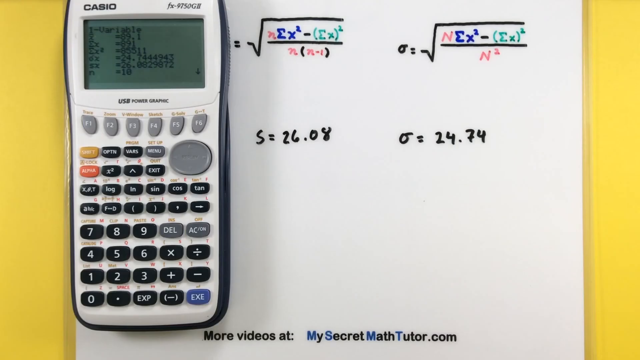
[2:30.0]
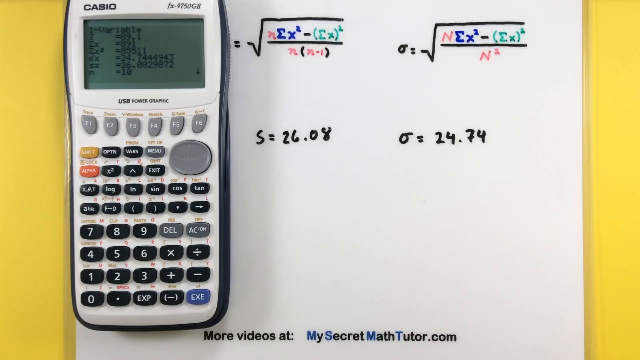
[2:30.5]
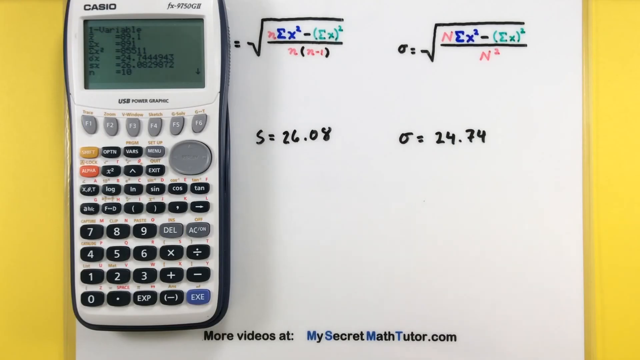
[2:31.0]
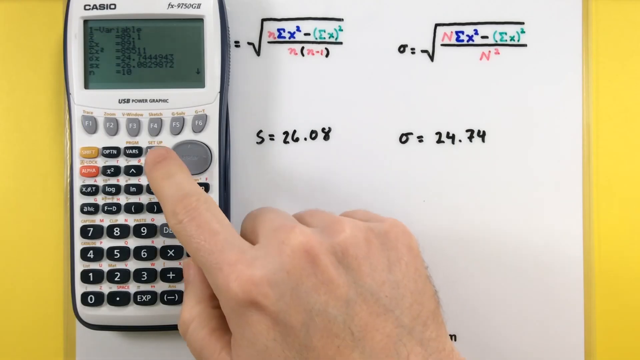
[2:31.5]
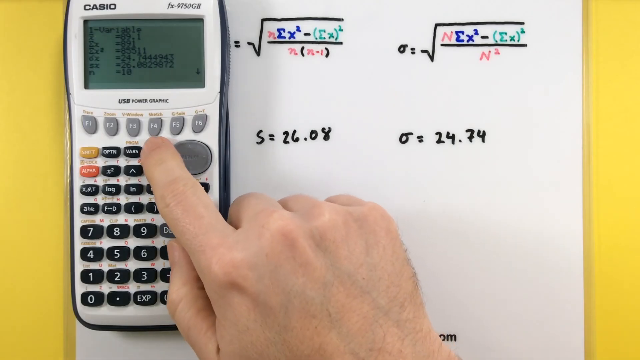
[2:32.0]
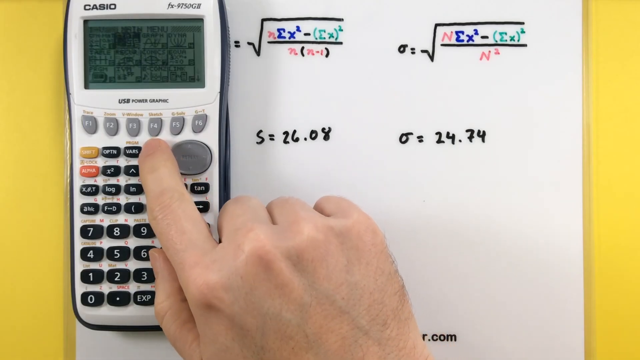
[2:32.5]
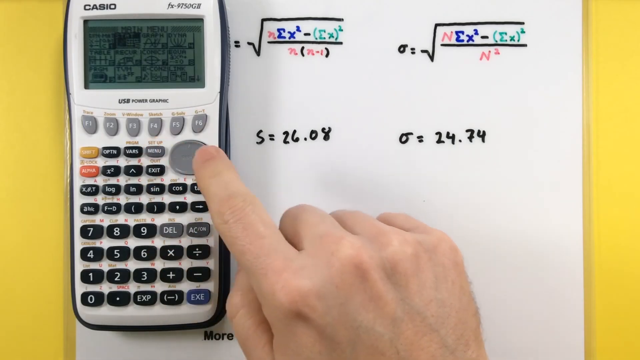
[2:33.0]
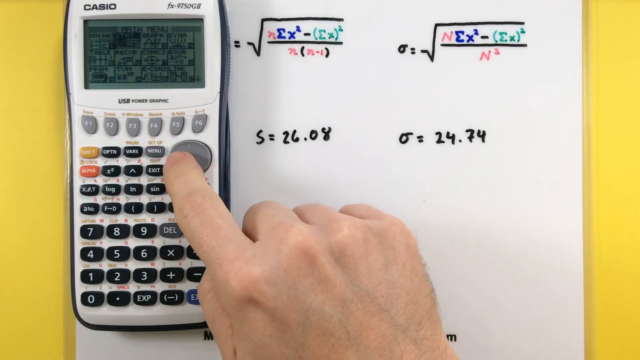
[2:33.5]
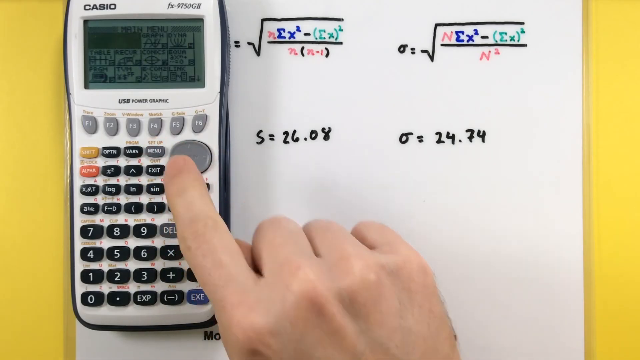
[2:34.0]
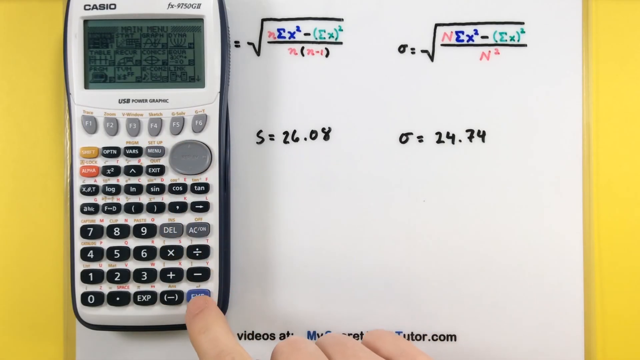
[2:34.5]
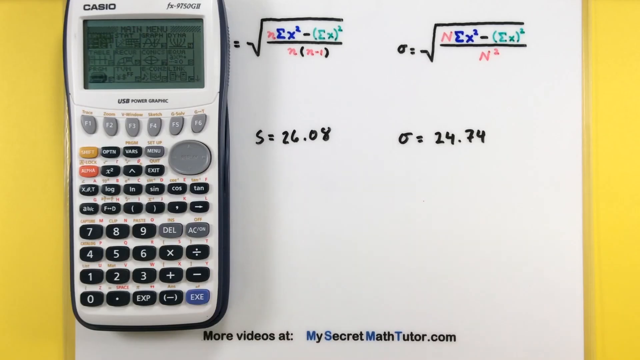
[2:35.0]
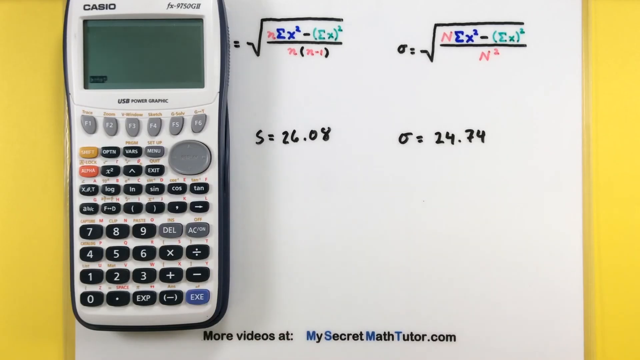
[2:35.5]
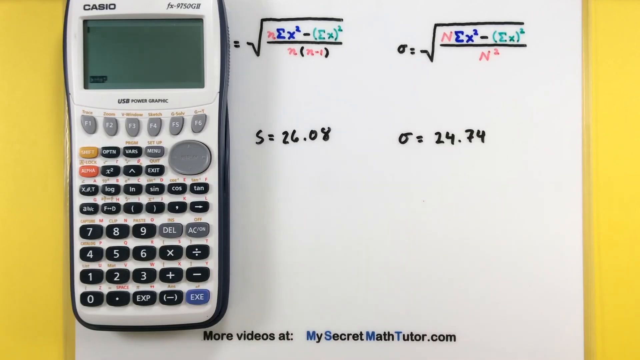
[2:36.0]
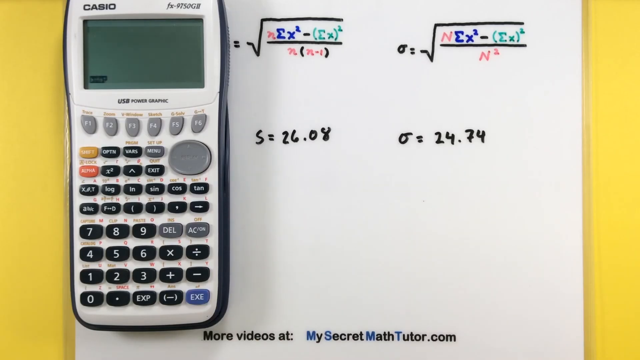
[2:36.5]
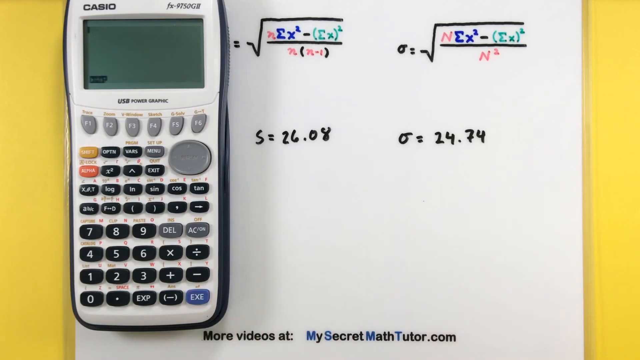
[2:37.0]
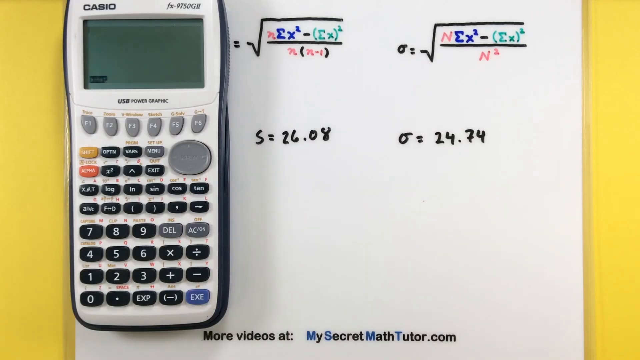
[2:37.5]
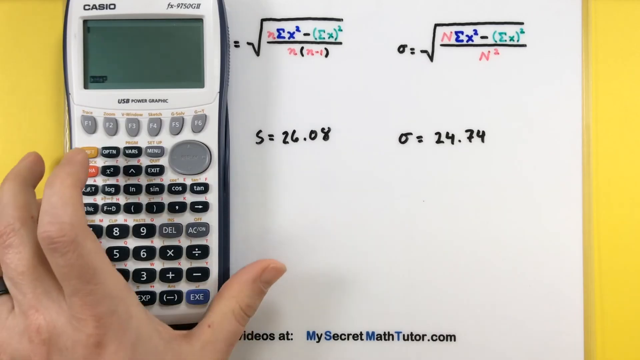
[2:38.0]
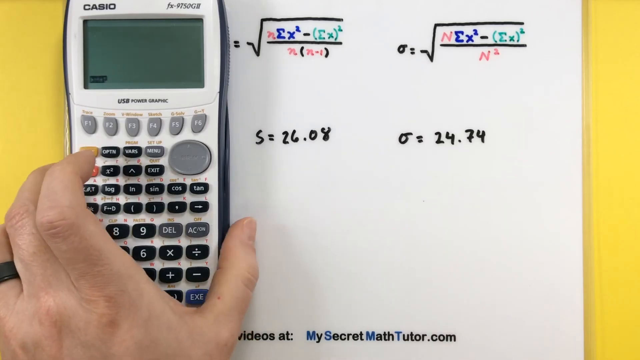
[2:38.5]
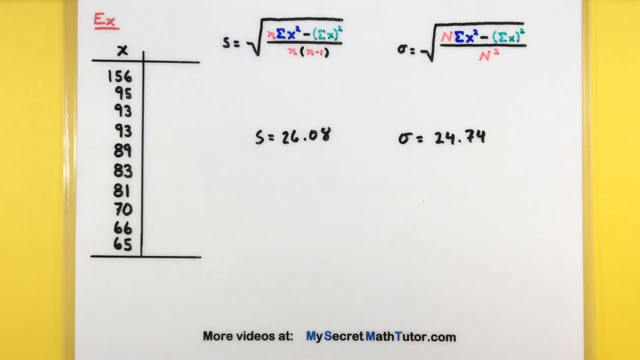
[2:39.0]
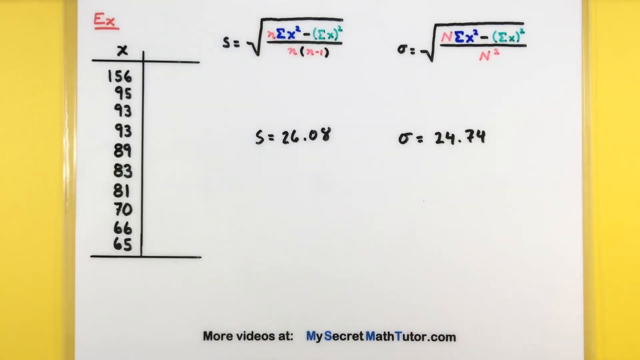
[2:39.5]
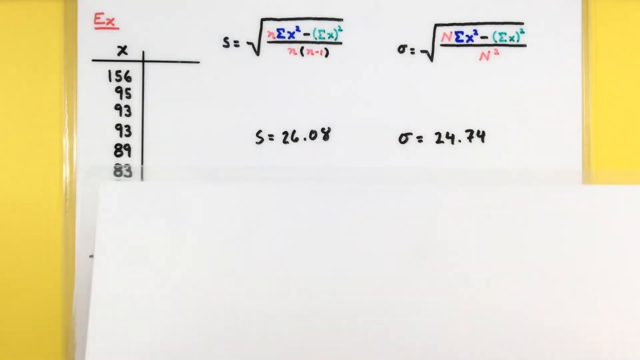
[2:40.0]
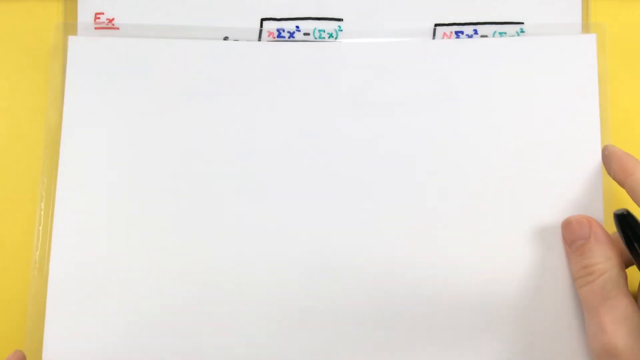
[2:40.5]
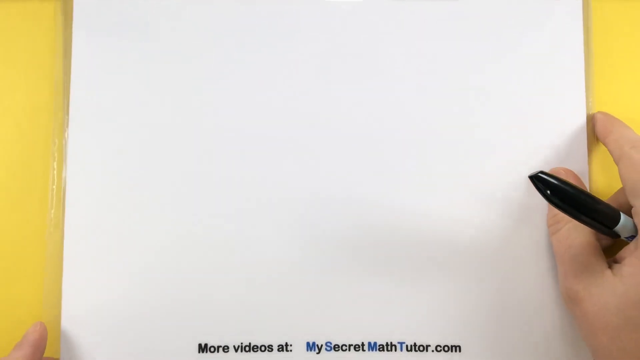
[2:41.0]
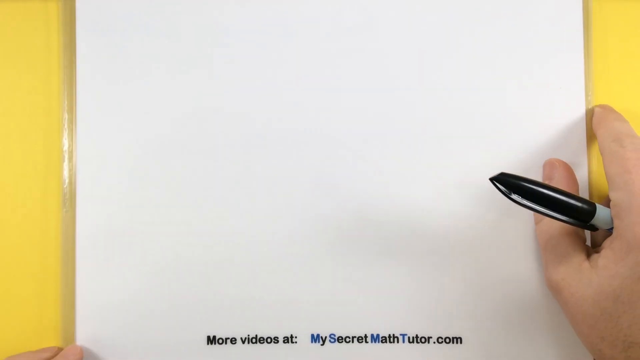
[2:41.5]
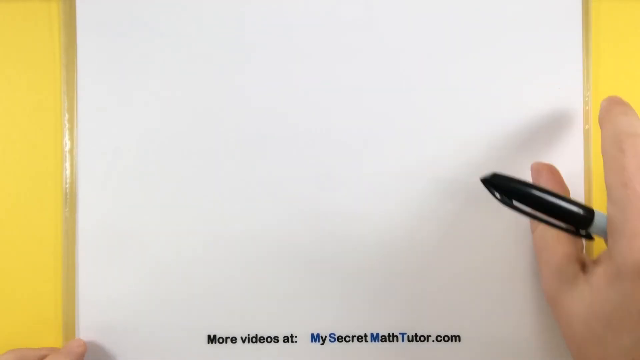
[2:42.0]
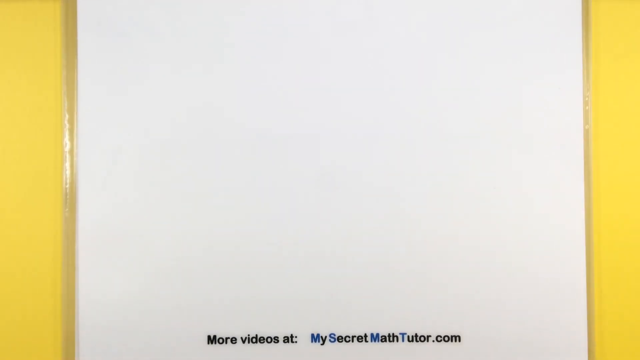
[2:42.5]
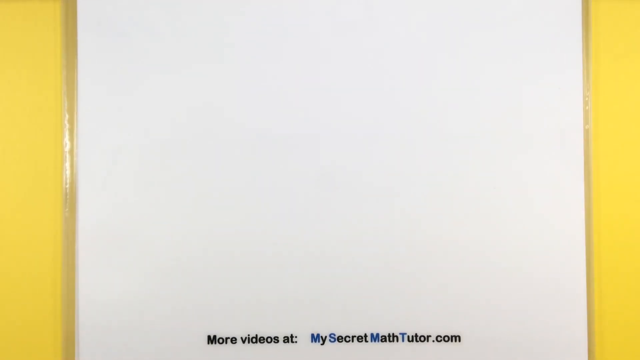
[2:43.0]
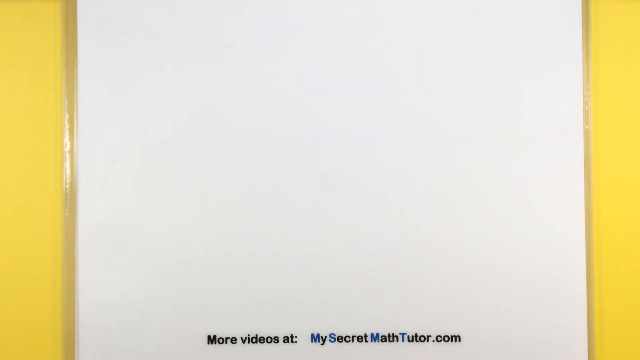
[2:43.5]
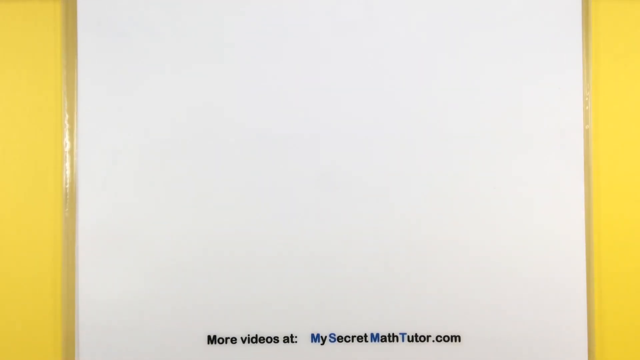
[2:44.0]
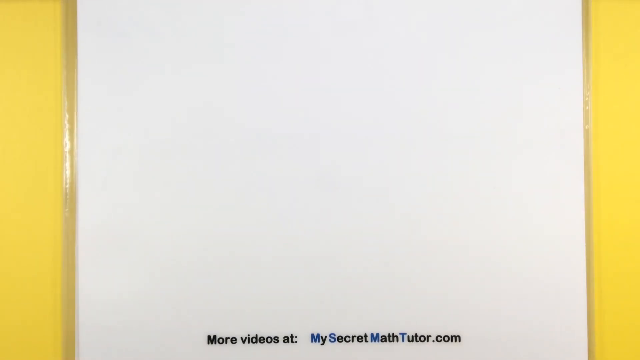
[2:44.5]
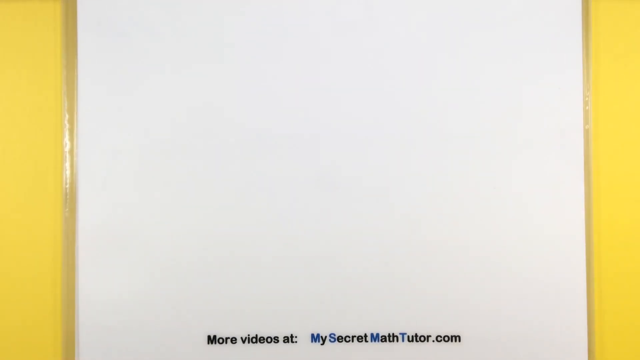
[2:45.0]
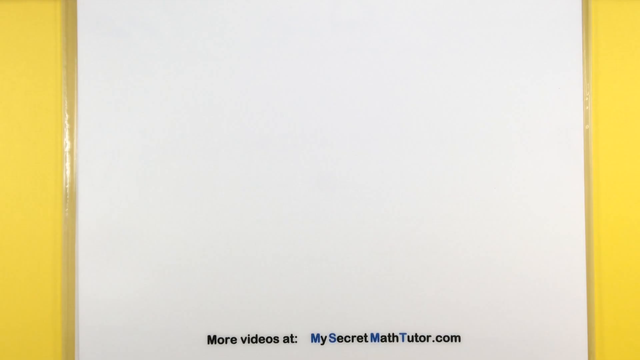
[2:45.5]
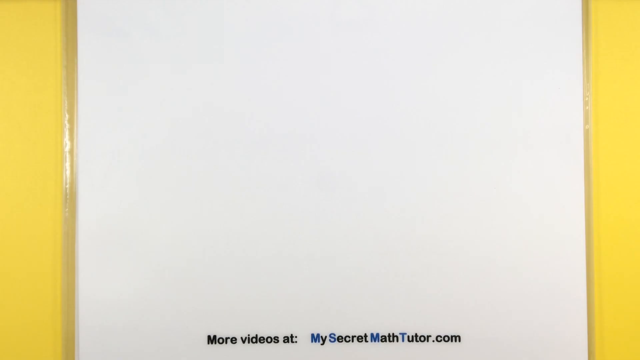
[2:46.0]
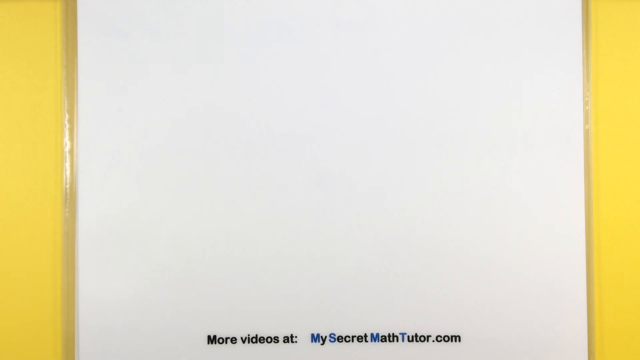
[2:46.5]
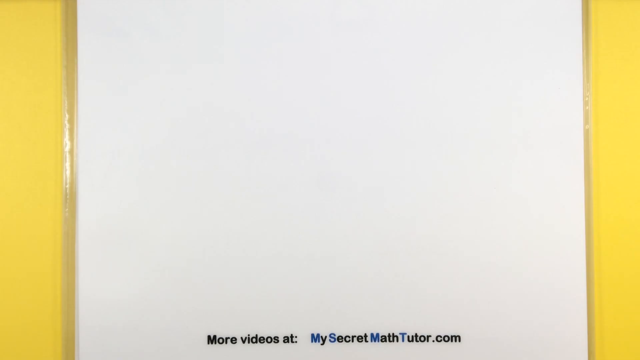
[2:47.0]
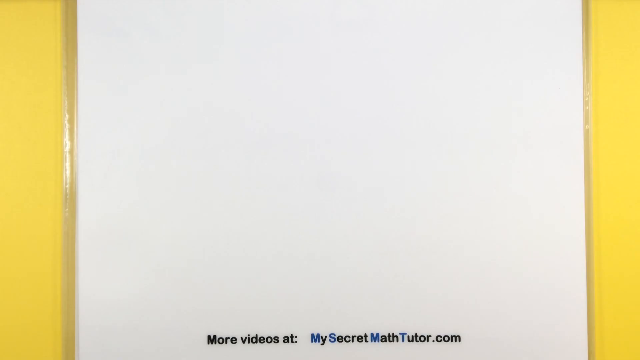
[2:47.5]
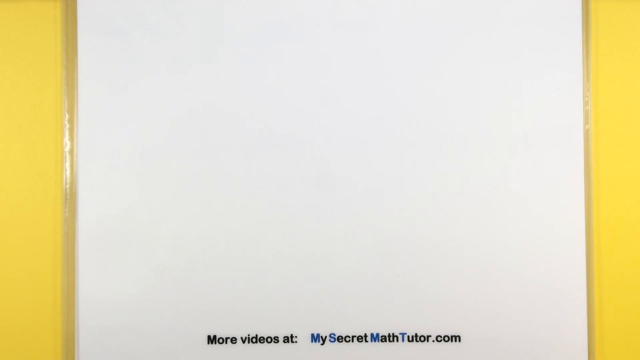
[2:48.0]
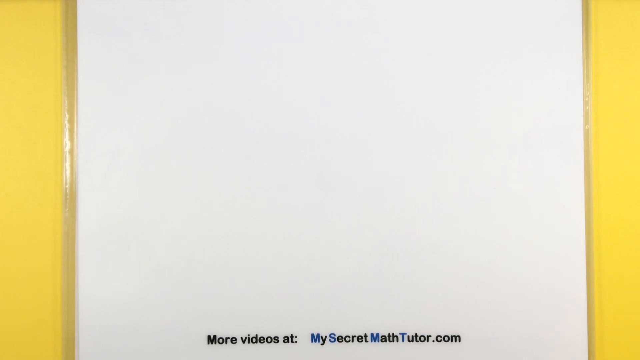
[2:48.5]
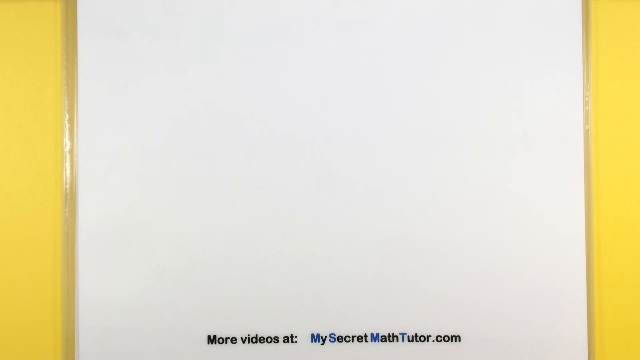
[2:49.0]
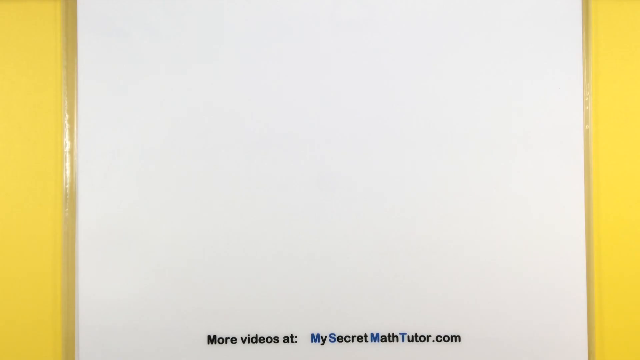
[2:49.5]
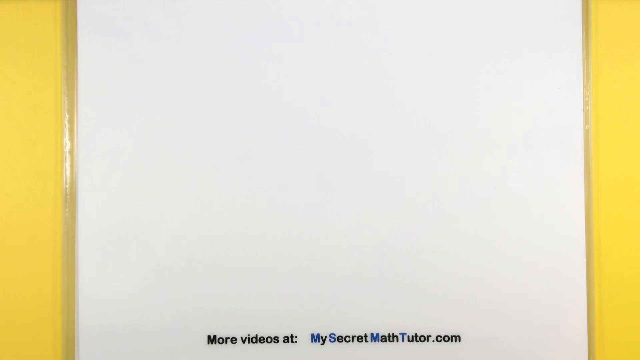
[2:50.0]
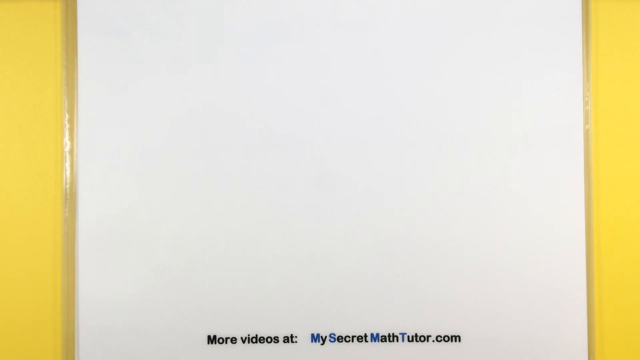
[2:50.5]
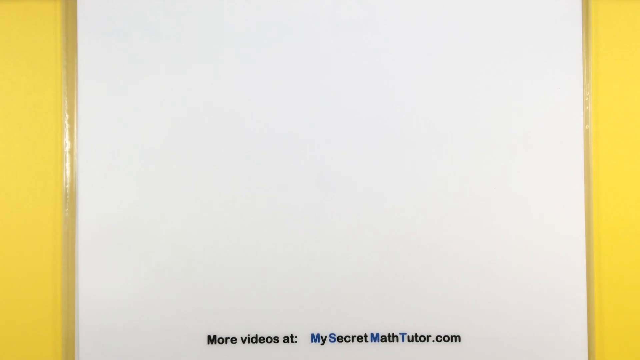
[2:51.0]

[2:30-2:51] A calculator is turned on, displaying various values on its monochromatic screen, which lacks a backlight; the data points are in black. The calculator has a pearly white face, a dark navy blue back, and mostly black buttons with white lettering. Calculations and values are written in marker on a laminated white piece of paper, with values in different colors, and everything rests on a yellow desk. Values written at the bottom say "S equals 26.08", and to the right of that a small space says "omega equals 24.74". A hand appears and begins navigating through the menus on the calculator.